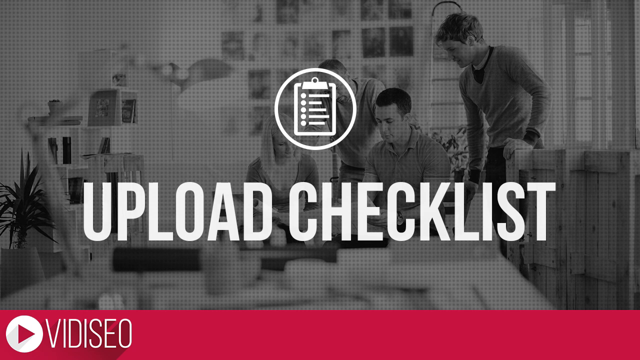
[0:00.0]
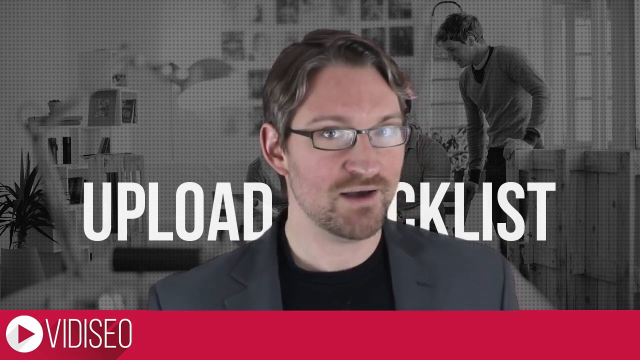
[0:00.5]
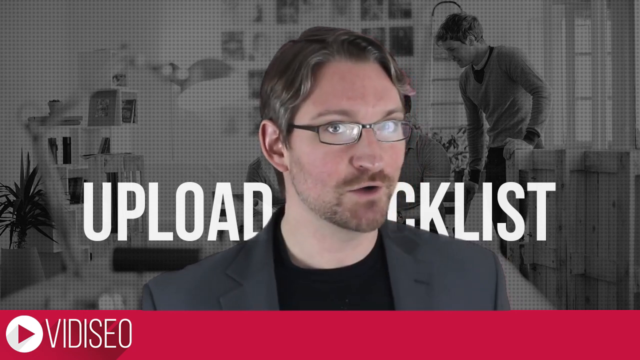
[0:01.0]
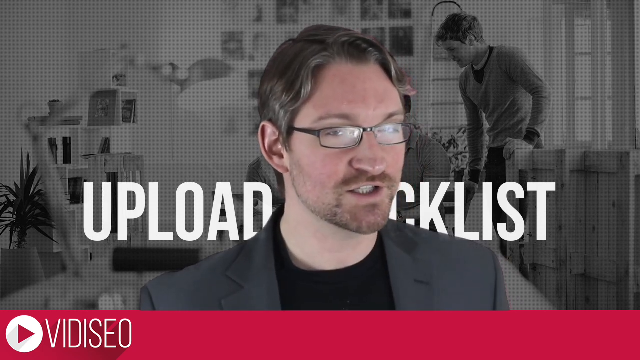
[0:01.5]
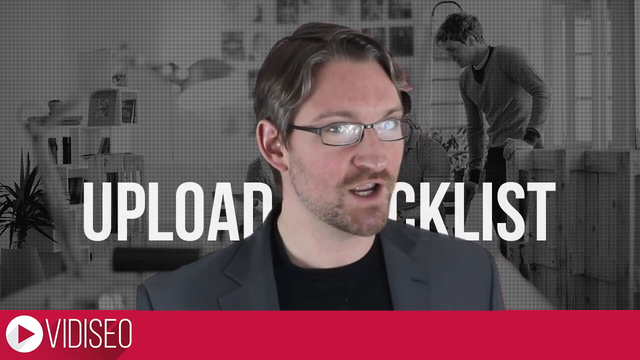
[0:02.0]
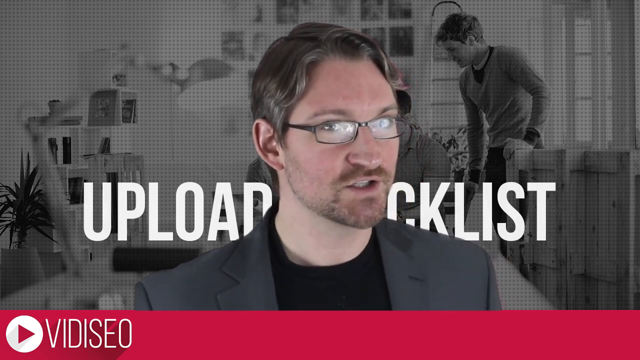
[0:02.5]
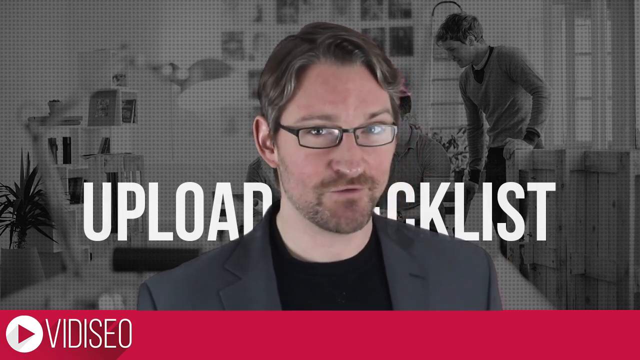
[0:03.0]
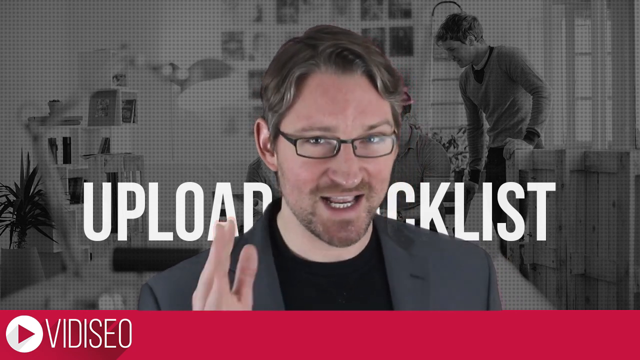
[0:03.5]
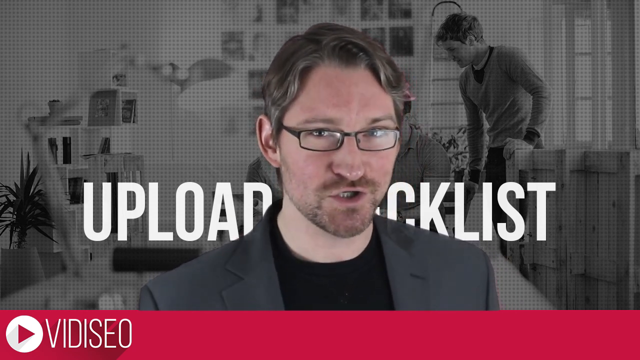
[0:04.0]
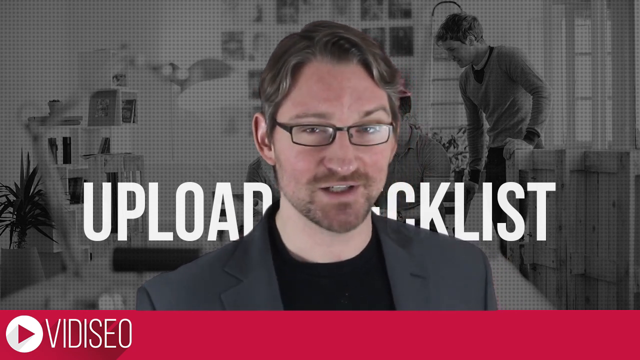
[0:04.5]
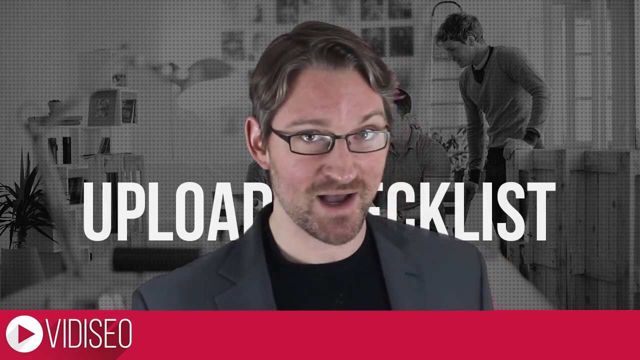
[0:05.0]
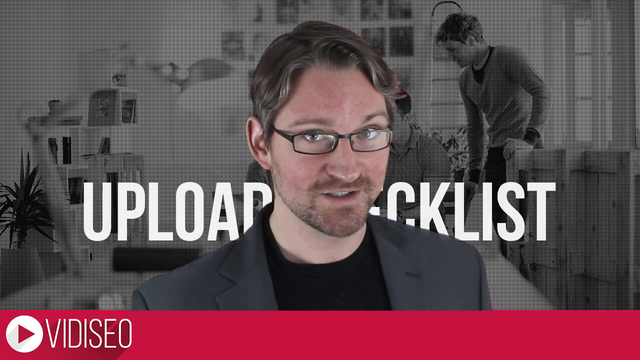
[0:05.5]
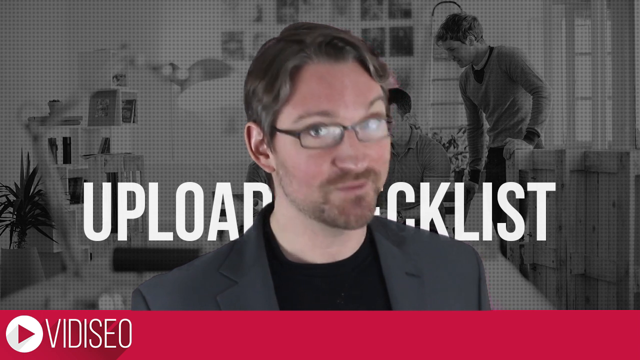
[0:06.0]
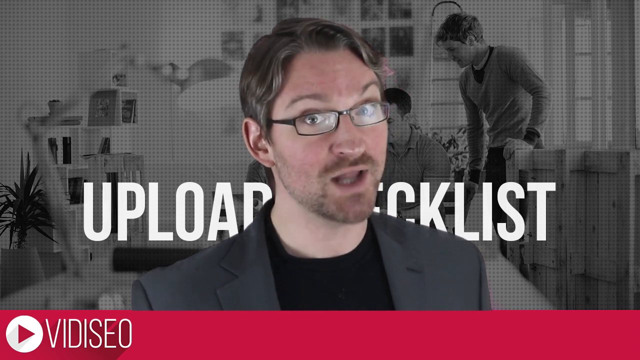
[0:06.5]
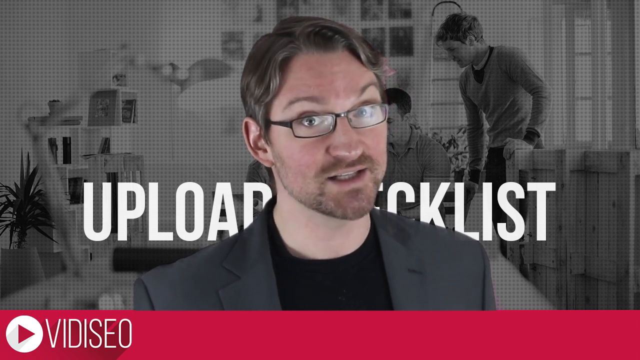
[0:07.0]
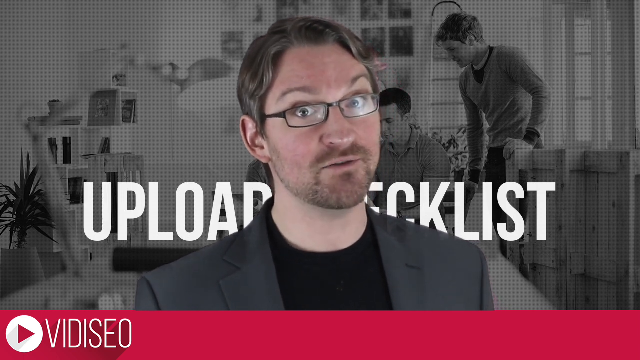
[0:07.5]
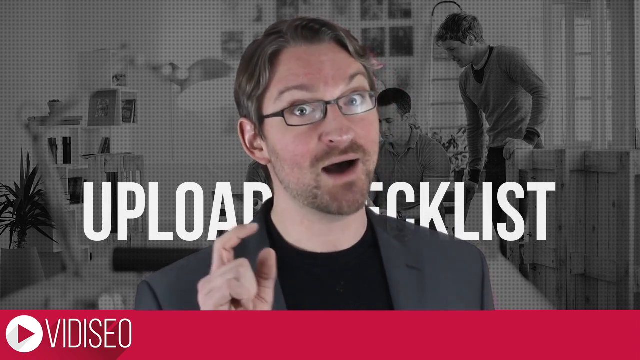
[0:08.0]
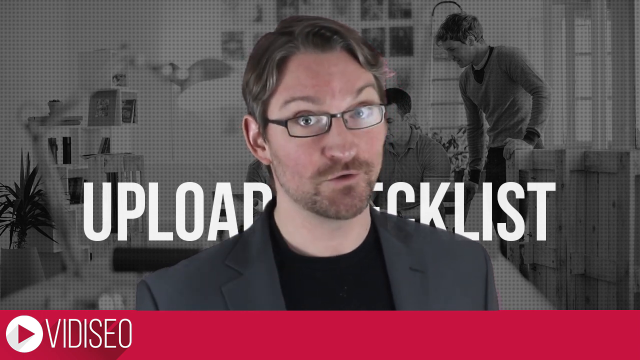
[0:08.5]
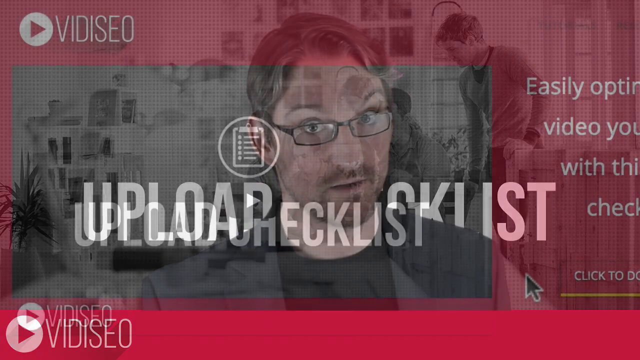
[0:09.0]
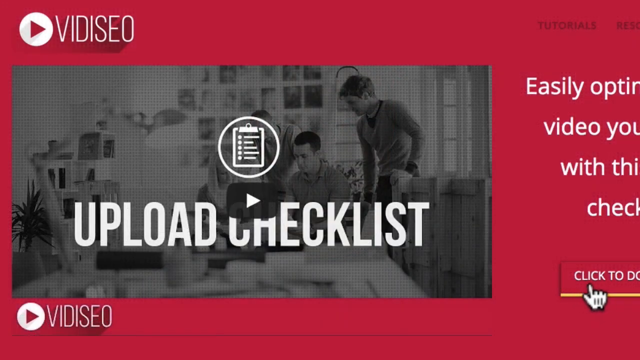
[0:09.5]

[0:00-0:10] The screen first reads "Upload Checklist," with "VIDISEO" at the bottom. A man with glasses and a beard, wearing a black shirt and a gray suit, appears on screen making gestures with his hand. "Upload Checklist" appears, followed by a list of items. The background looks like a family in a living room, with two people visible in the background. It is gray. Near the end, the video segues into items on screen reading "easily optimize video with this checklist," which is cut off on the right side. It is in red and apparently says "click to do."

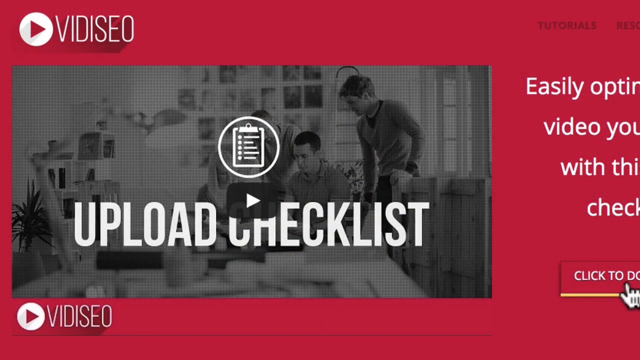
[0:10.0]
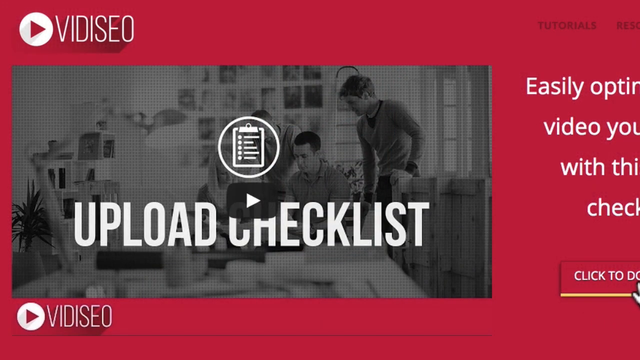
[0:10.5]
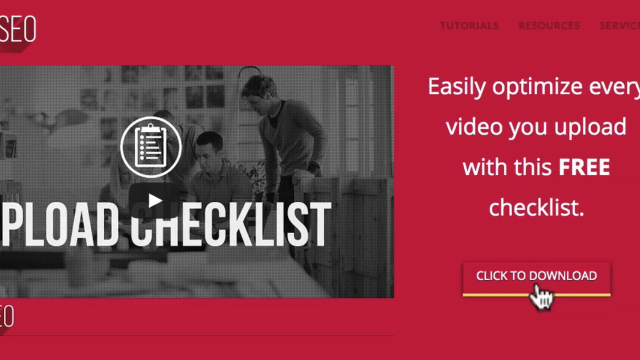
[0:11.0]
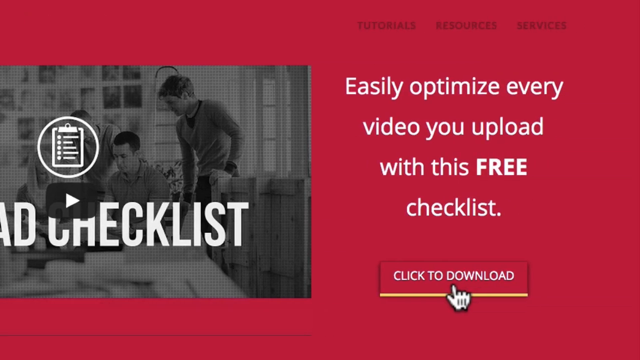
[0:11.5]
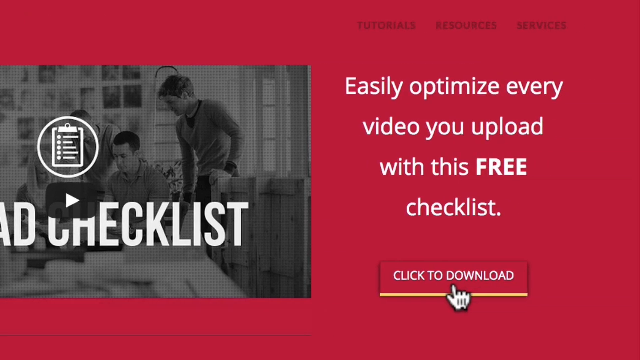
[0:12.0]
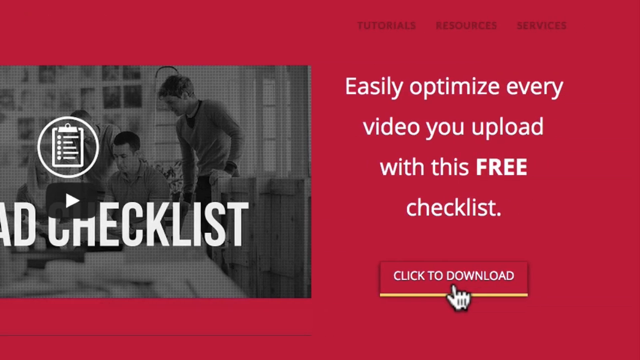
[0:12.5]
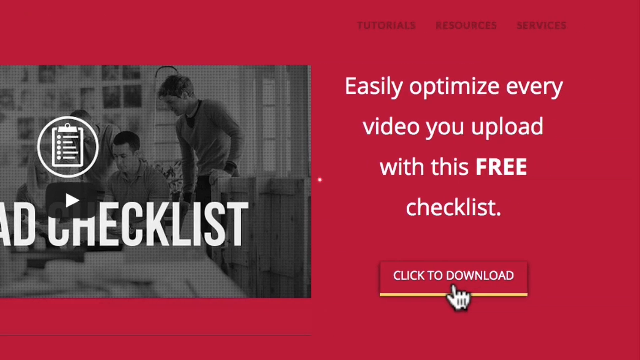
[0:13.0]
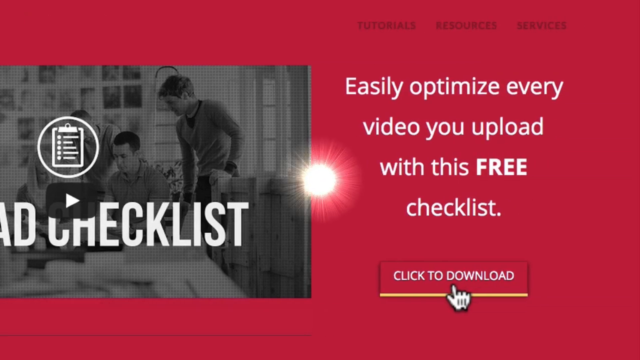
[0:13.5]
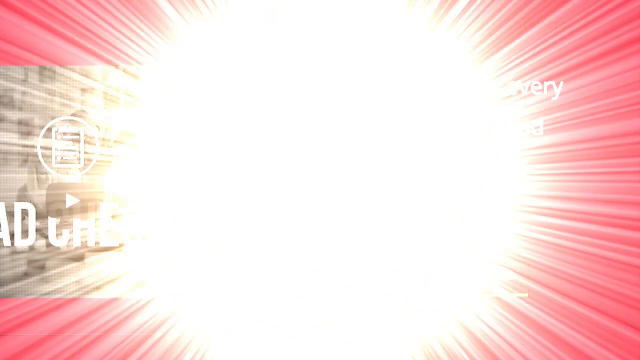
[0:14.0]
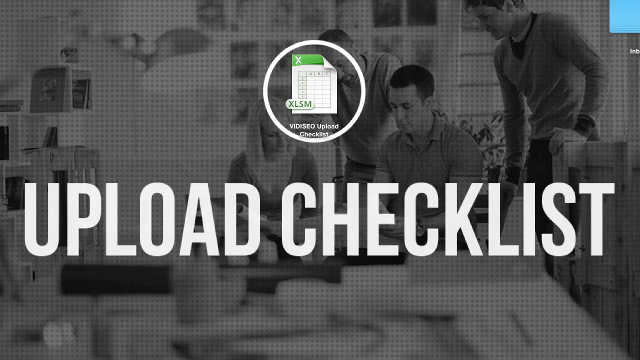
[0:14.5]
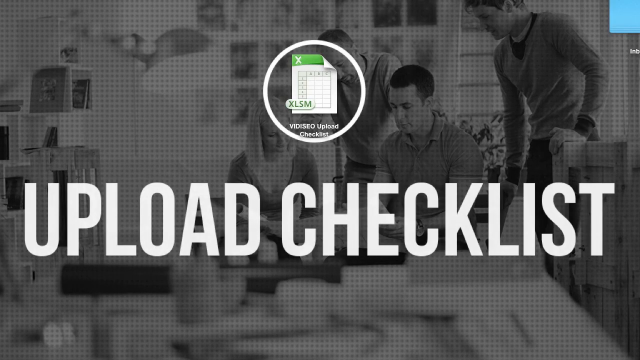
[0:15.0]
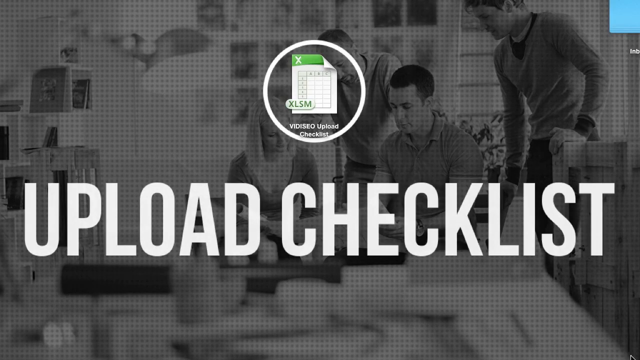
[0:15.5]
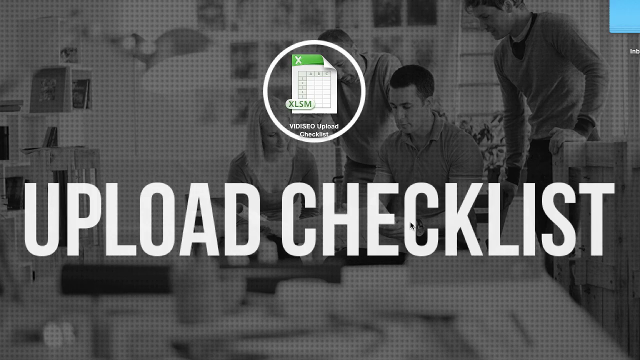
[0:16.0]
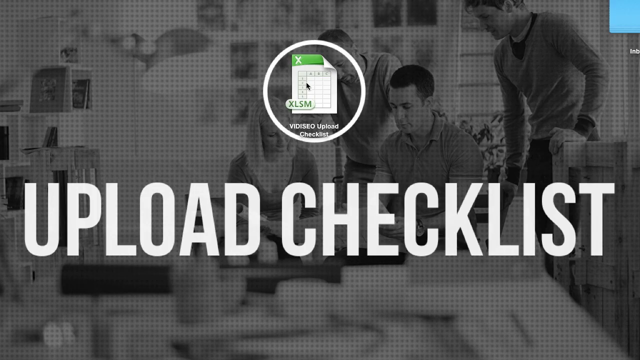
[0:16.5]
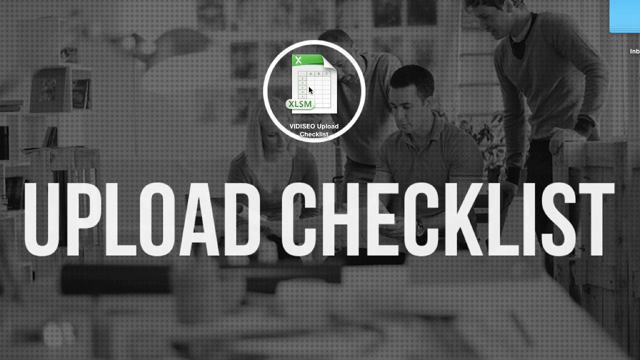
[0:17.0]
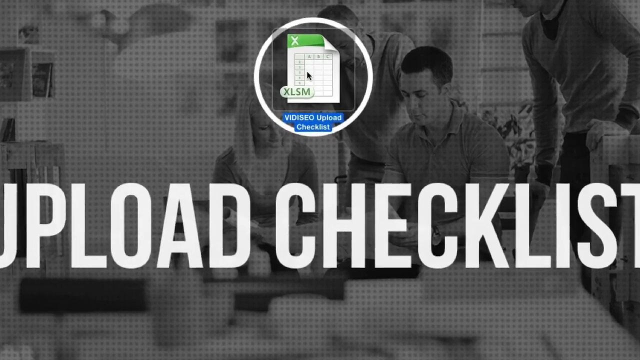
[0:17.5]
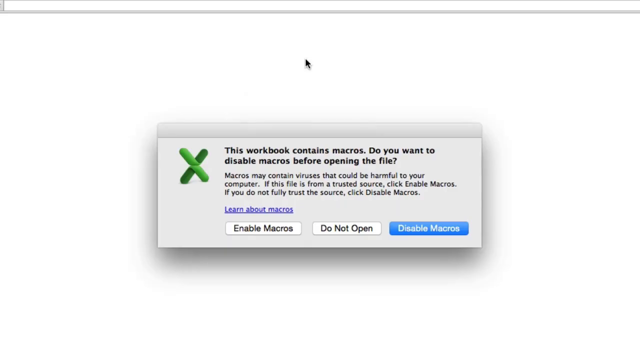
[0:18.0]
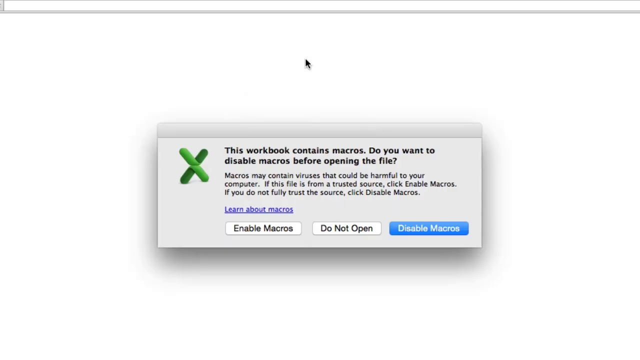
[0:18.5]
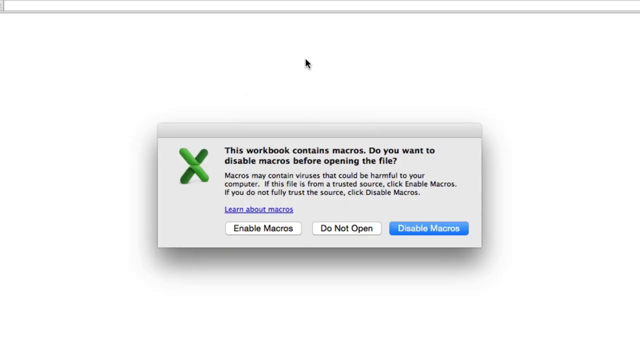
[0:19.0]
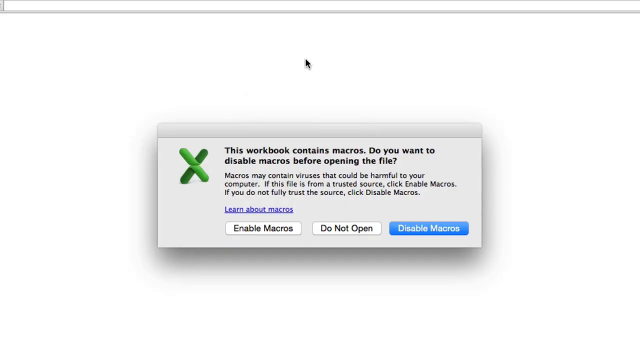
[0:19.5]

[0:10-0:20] The view scrolls, and the text on the red parts becomes clearly readable: "easily optimize every video you upload," "FREE" in caps, "checklist," and "click to download." At the top are "tutorials," "resources," "services," and "more" in a somewhat darker color. A hand hovers over "click to download." "upload checklist" appears as an Excel file being downloaded, and it opens in Excel form. A somewhat blank page comes up with a menu reading "This workbook contains macros. Do you want to disable macros before opening this file?" with the options "learn more about macros," "enable macros," "do not open," and "disable macros." The disable option is highlighted.